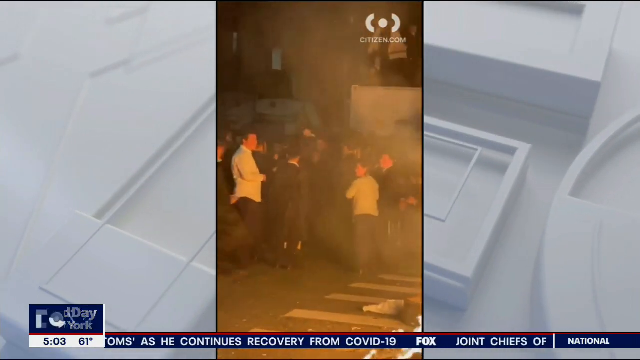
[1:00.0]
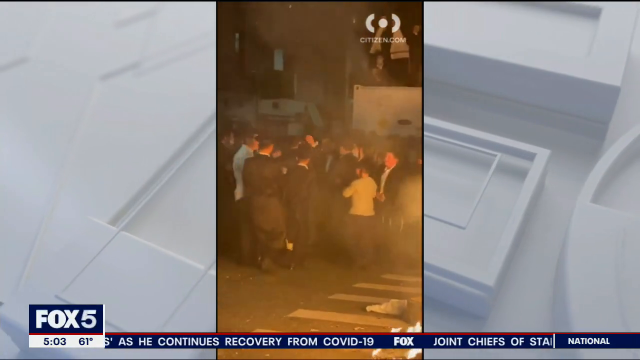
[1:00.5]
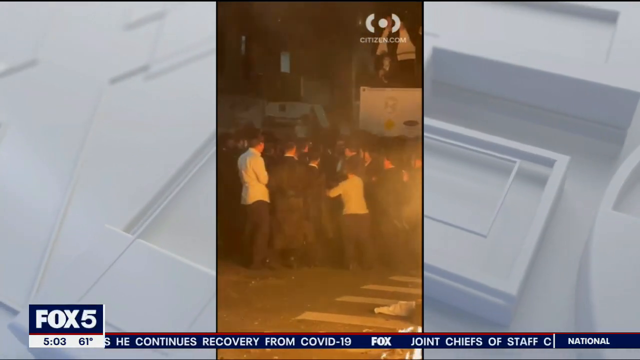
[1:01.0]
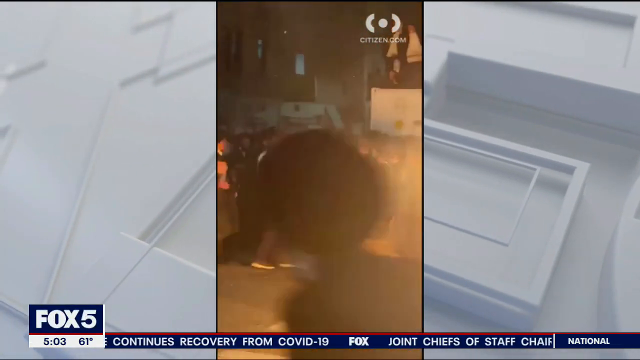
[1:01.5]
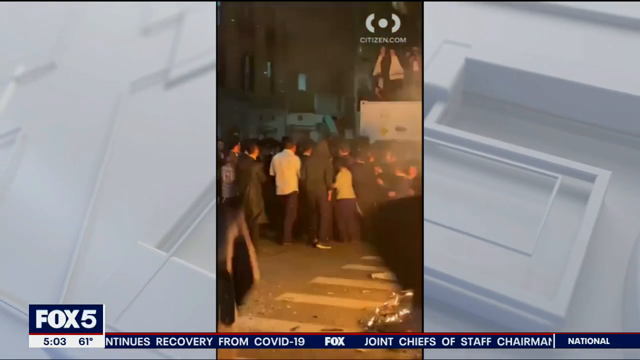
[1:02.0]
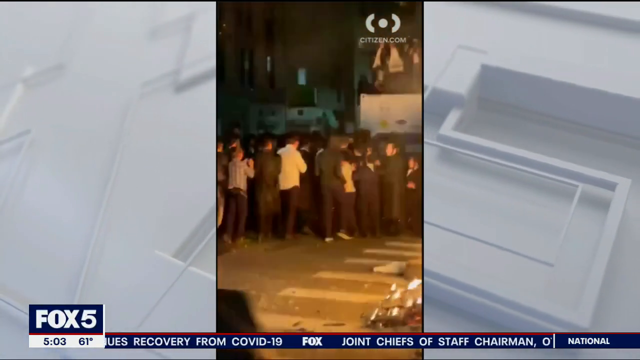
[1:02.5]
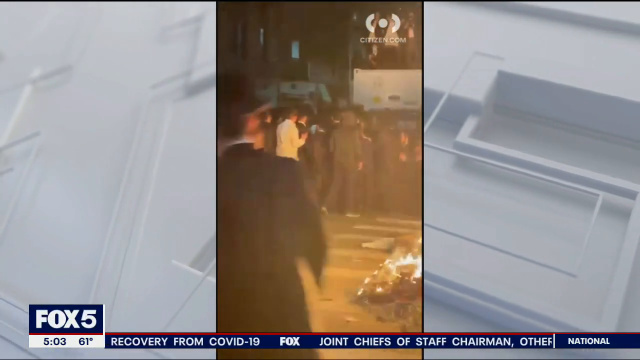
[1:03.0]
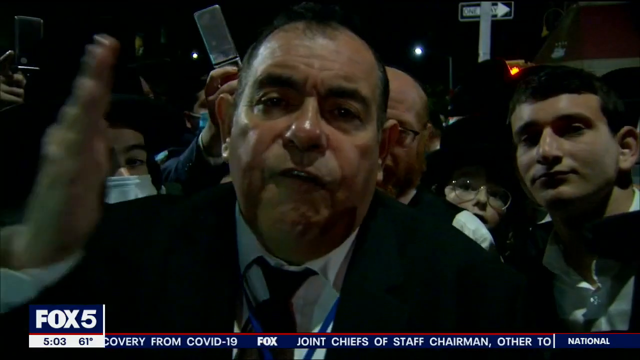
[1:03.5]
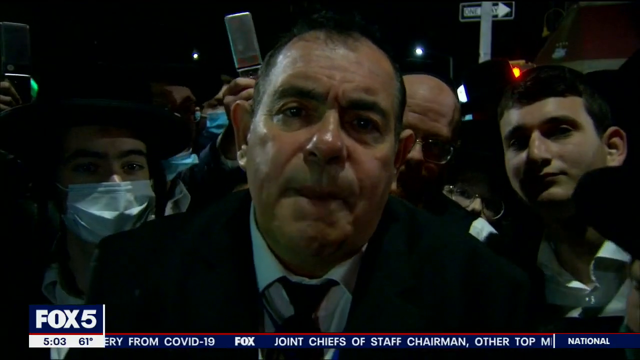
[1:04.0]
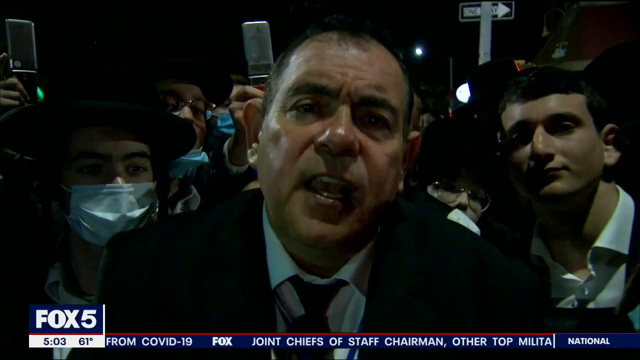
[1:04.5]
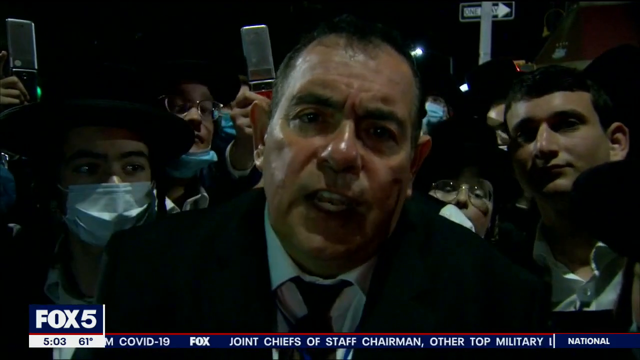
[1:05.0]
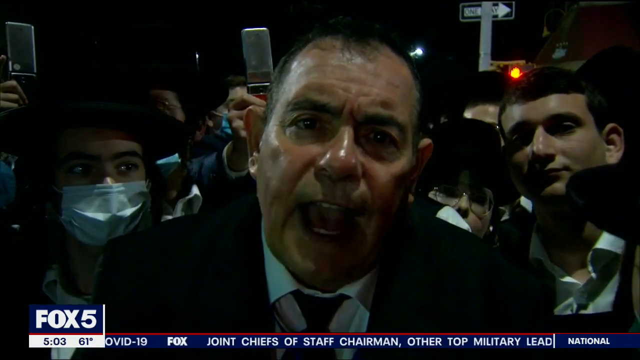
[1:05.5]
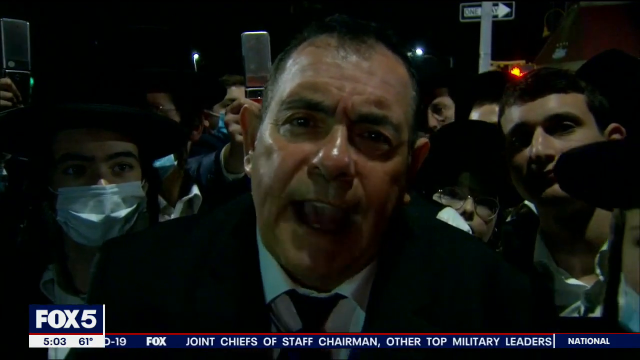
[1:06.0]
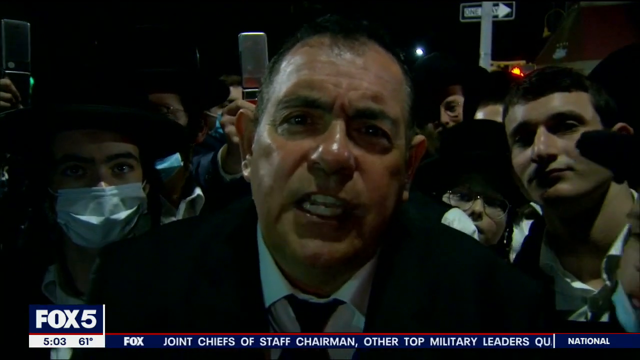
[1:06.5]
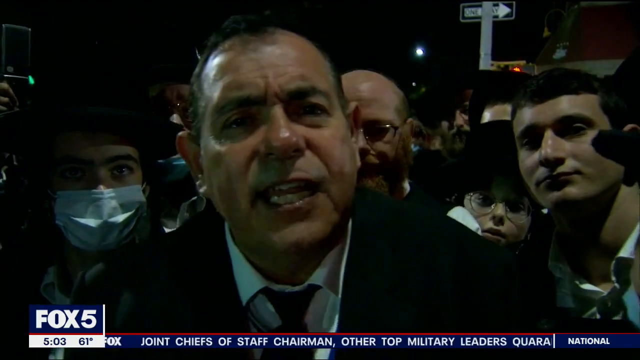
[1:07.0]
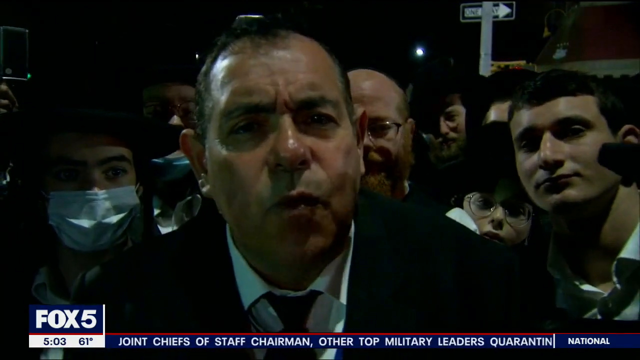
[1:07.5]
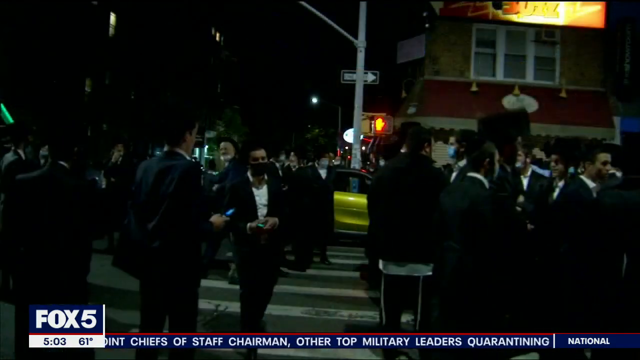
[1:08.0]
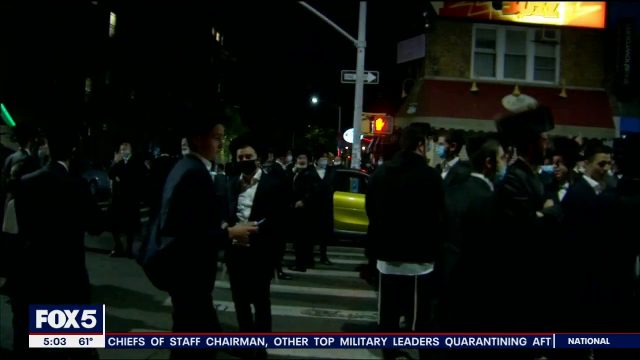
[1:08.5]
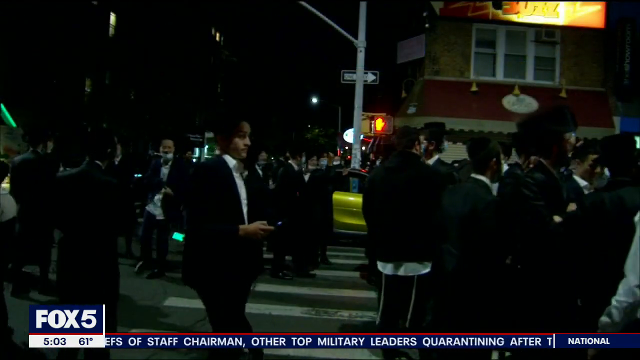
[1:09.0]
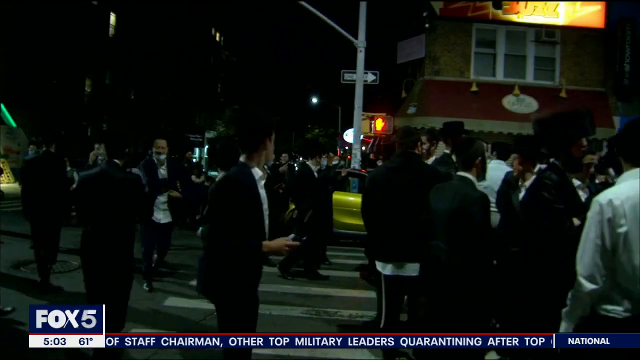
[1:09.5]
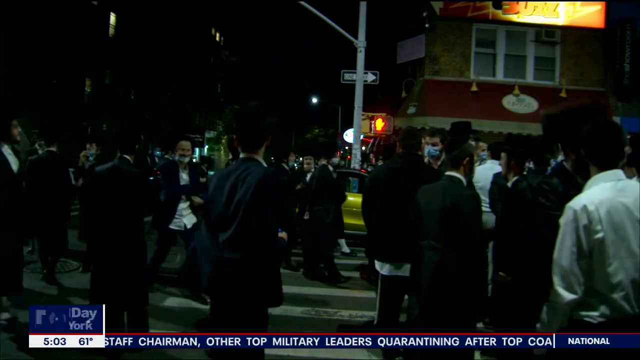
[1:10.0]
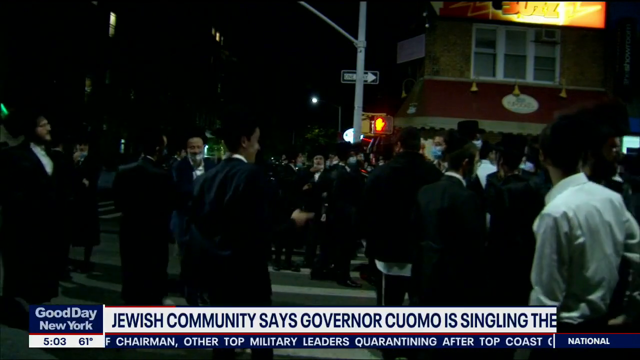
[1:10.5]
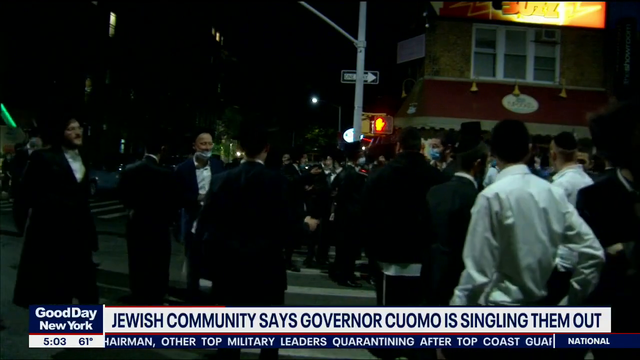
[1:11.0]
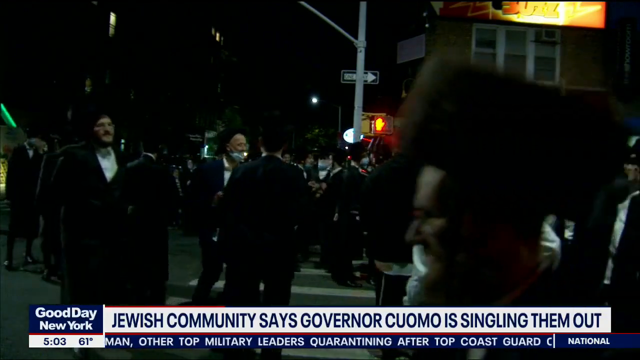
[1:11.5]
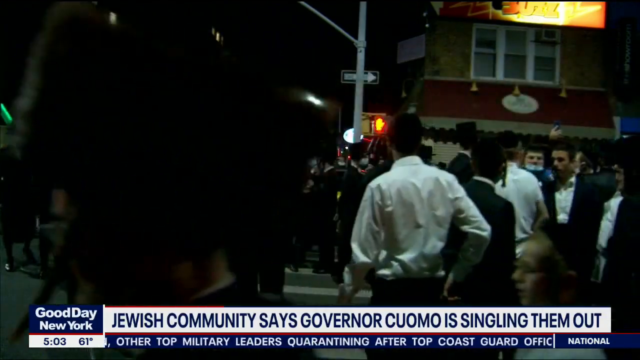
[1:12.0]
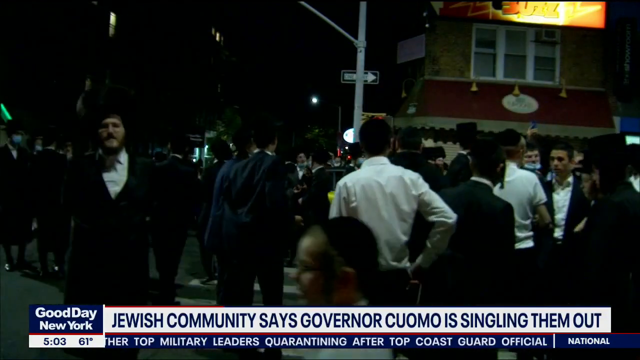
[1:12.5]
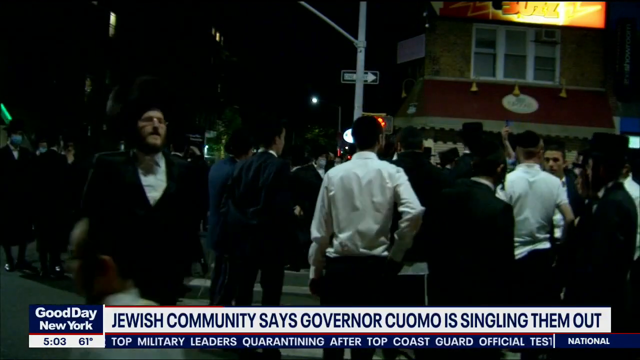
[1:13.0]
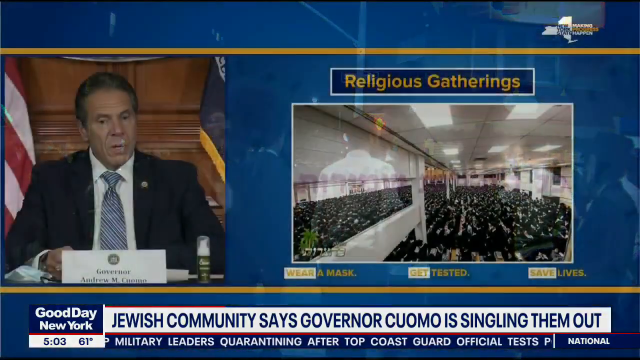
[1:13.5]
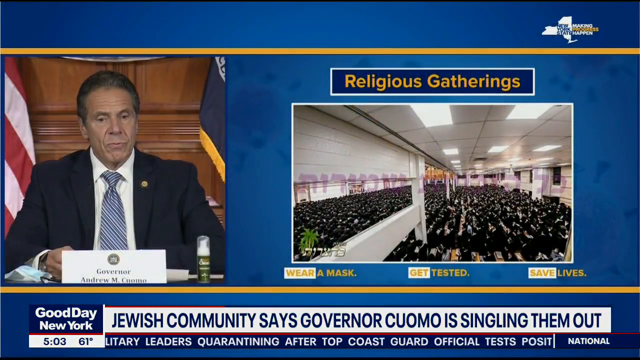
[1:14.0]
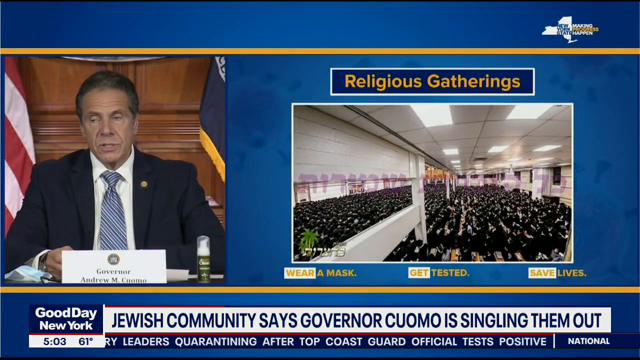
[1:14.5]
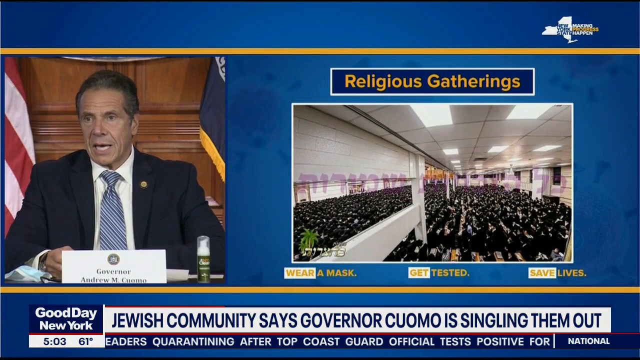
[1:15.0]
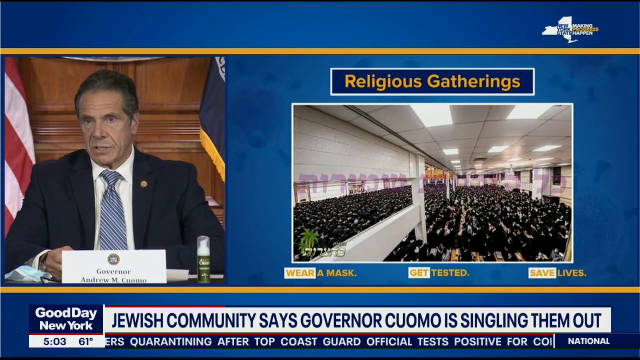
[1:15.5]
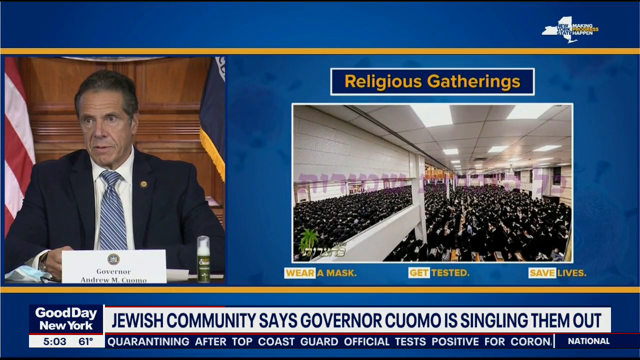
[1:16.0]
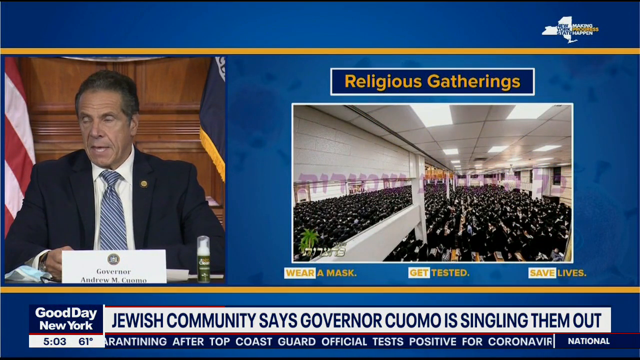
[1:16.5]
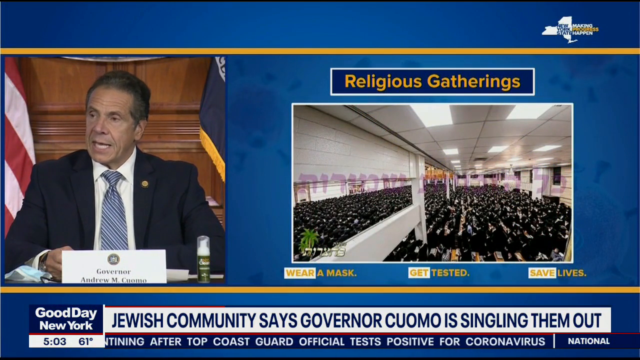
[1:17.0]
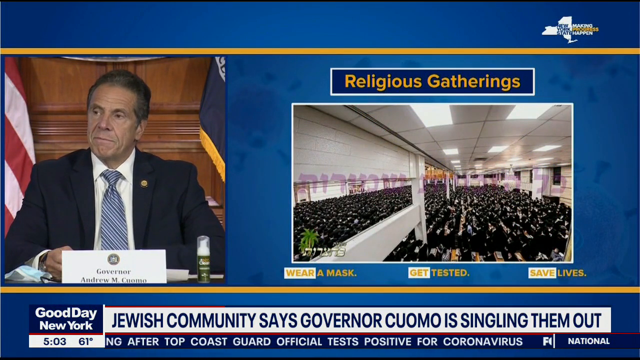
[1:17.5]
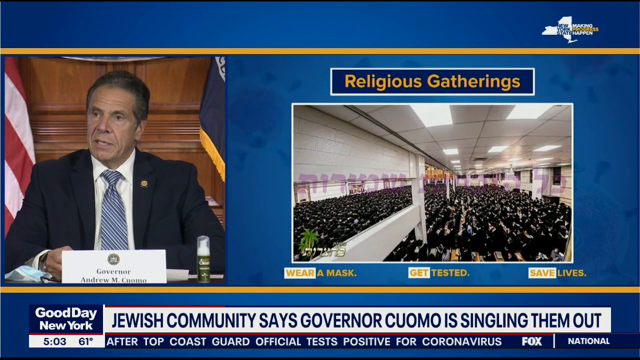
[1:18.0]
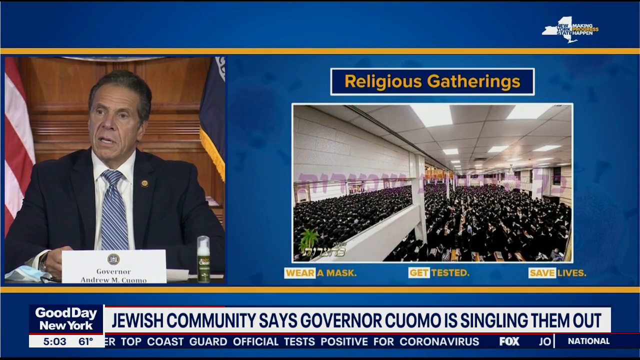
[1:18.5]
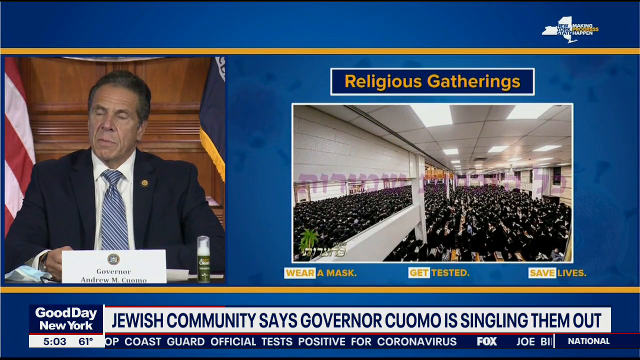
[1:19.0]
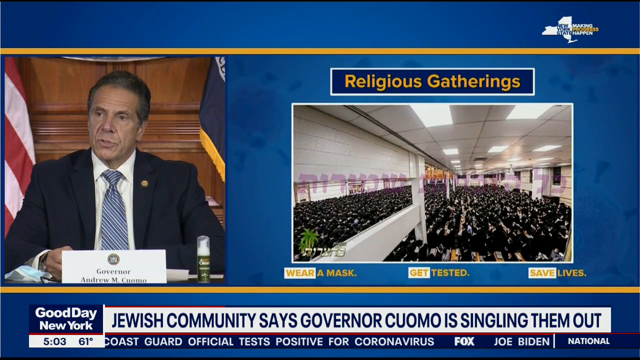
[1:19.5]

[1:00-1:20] A Hasidic man in a long coat runs into the crowd. The video switches to a close-up, interview-style shot of a man in the centre of the frame, wearing a black suit and black tie with no hat. Behind him are hordes of men, some with face masks and some without. The man is extremely frustrated and angry, looking directly into the camera. He bangs his right hand down onto his left hand several times, repeating himself, yells into the camera, tilts his head, and continues to yell. The video switches to men standing in the street, and text appears at the bottom in a white bar, reading in blue text "Jewish community says Governor Cuomo is singling them out". The men are shown walking around. A split screen follows: on the left is an interview with the governor, and on the right is apparently a poster. The background is blue, with a New York State logo in the top right-hand corner and yellow stripes above and below the images. On the left, the governor speaks to a delegation, with his name on a plate in front of him and the American flag behind him. The poster on the right has a rectangle reading "religious gatherings" in yellow text; below it is an image from within an extremely packed synagogue, taken from a high-up angle showing many people, and below that are the words "wear a mask, get tested, save lives" in yellow, with "wear", "get" and "save" highlighted in a white box. The governor nods his head as he speaks and tilts it to the side.